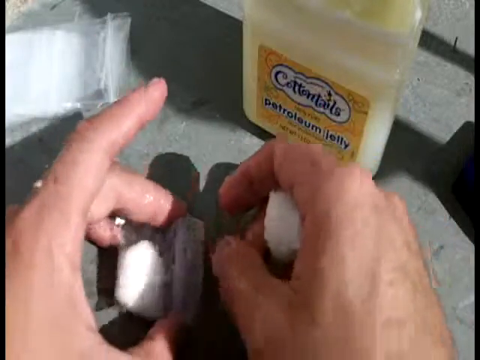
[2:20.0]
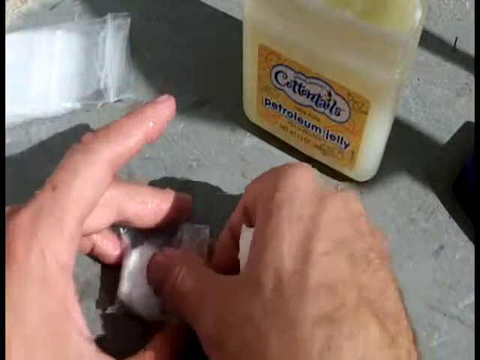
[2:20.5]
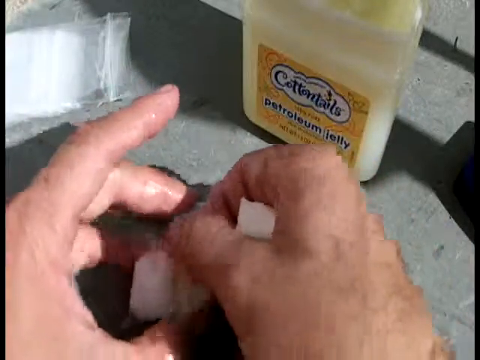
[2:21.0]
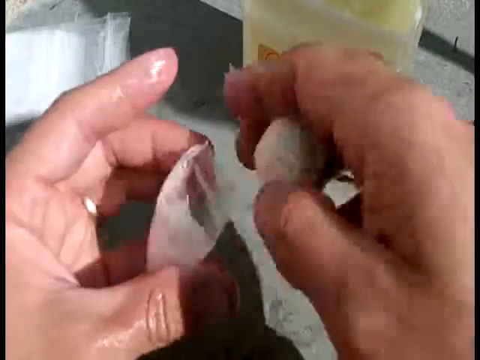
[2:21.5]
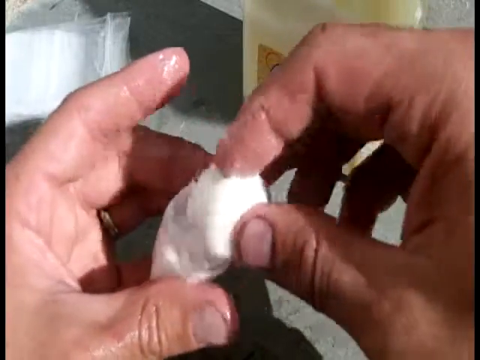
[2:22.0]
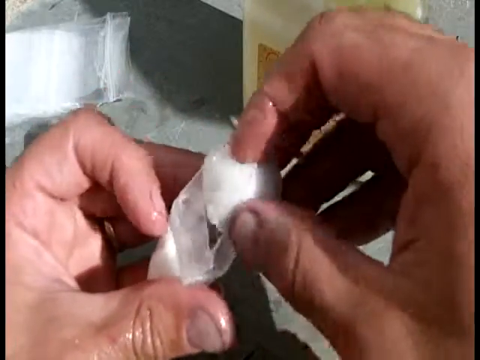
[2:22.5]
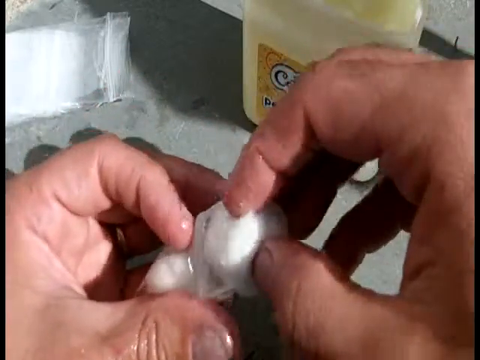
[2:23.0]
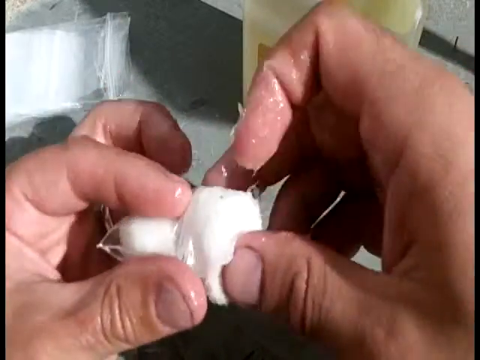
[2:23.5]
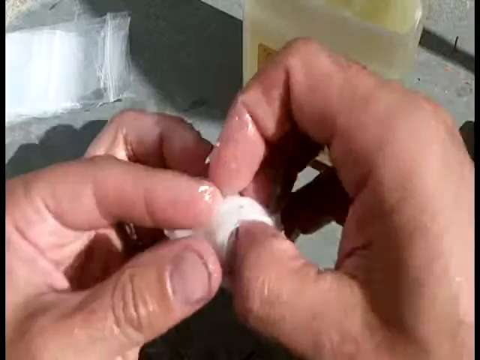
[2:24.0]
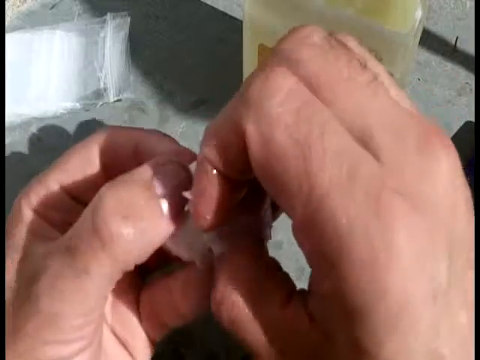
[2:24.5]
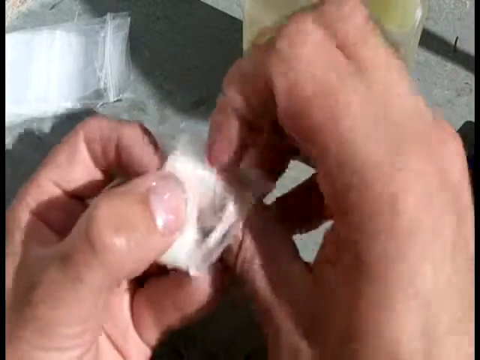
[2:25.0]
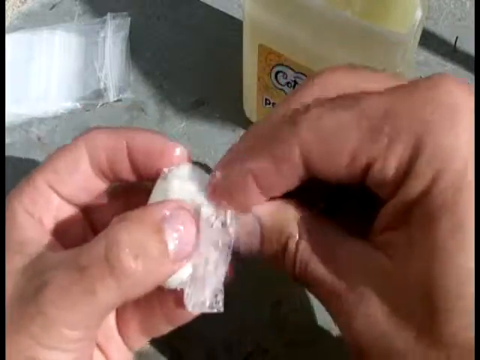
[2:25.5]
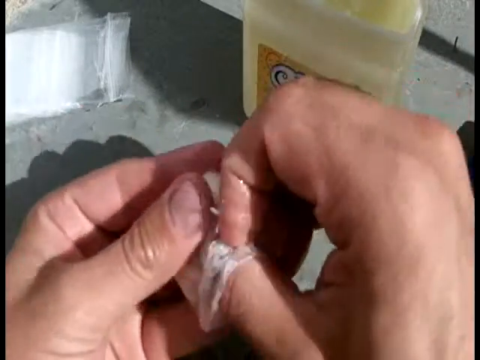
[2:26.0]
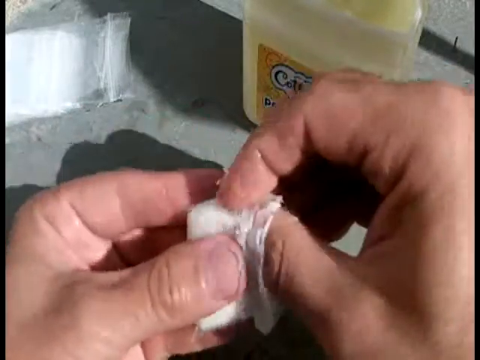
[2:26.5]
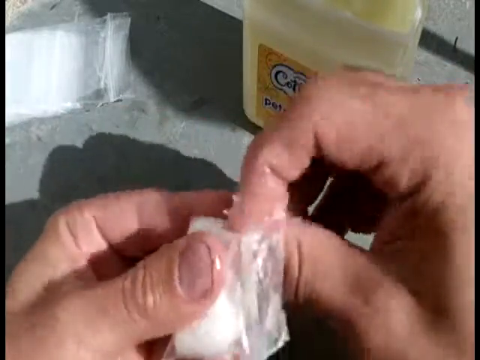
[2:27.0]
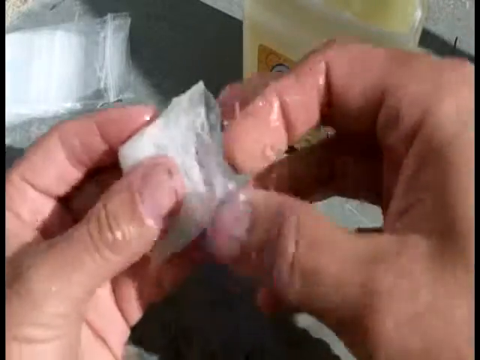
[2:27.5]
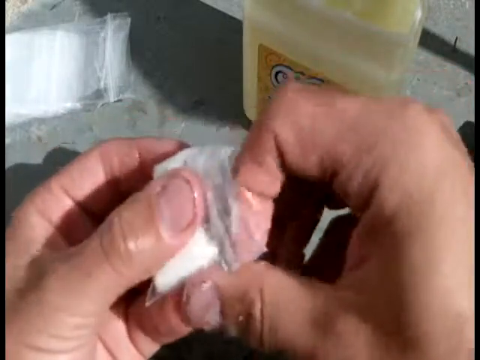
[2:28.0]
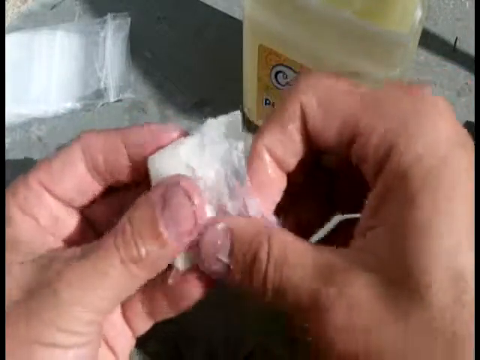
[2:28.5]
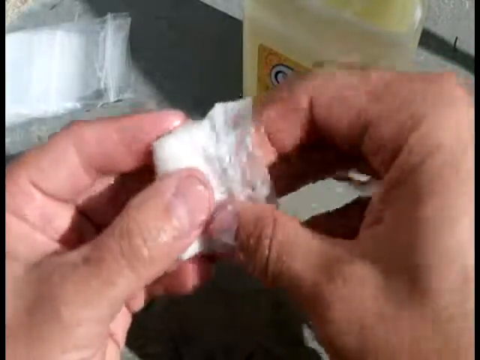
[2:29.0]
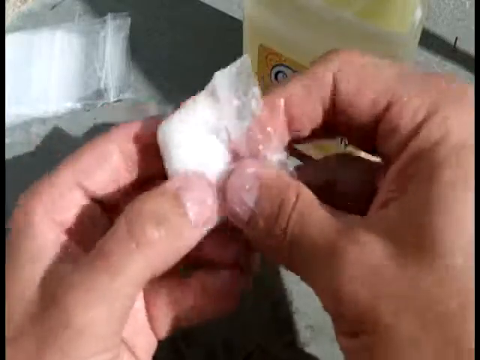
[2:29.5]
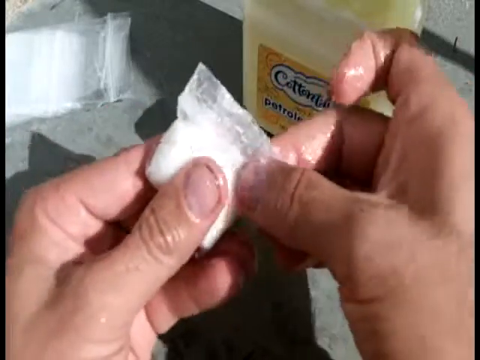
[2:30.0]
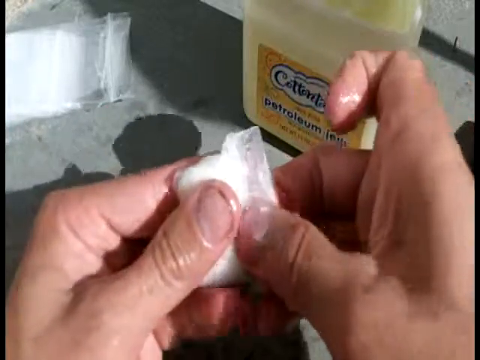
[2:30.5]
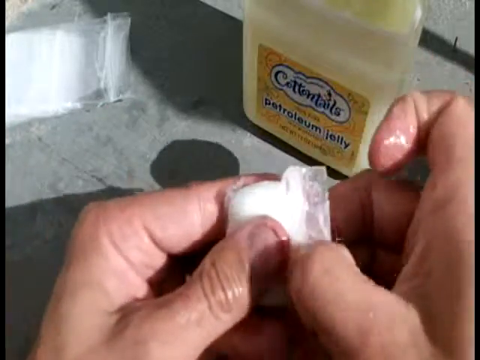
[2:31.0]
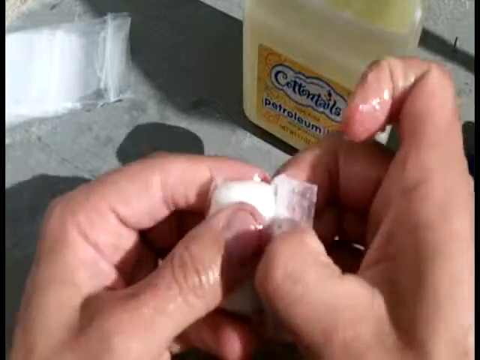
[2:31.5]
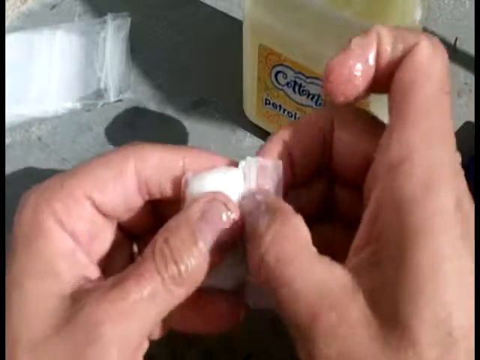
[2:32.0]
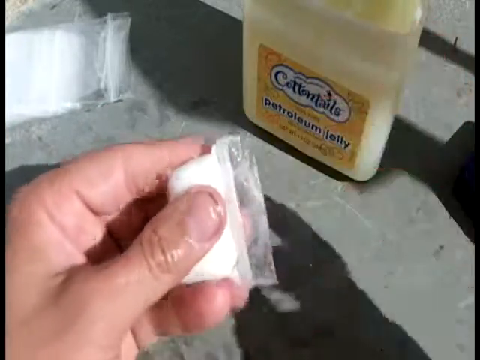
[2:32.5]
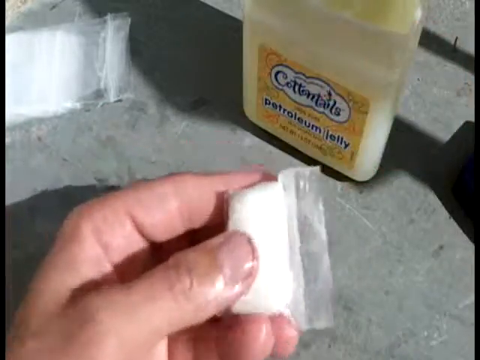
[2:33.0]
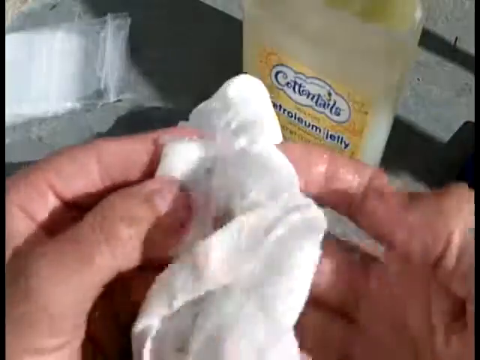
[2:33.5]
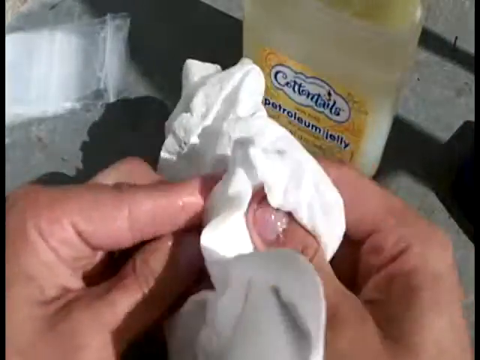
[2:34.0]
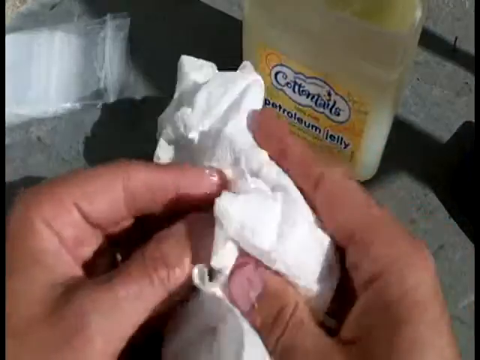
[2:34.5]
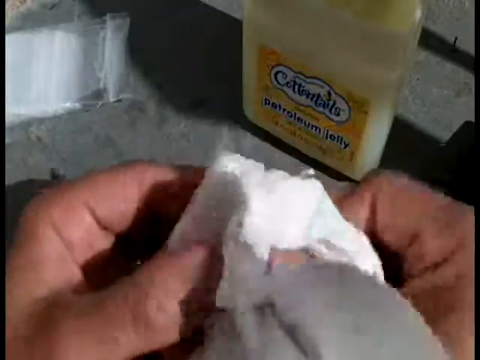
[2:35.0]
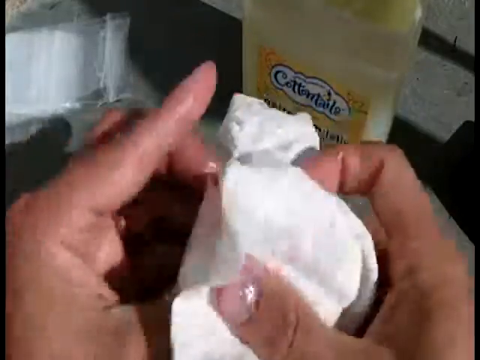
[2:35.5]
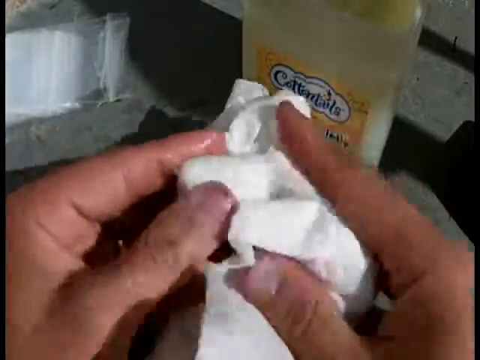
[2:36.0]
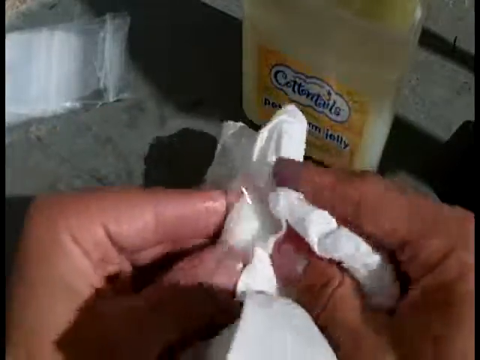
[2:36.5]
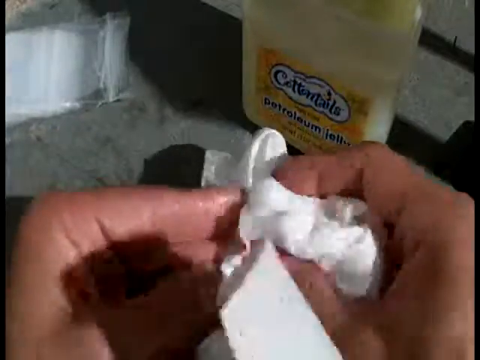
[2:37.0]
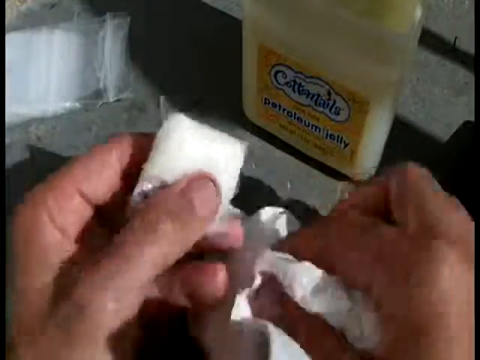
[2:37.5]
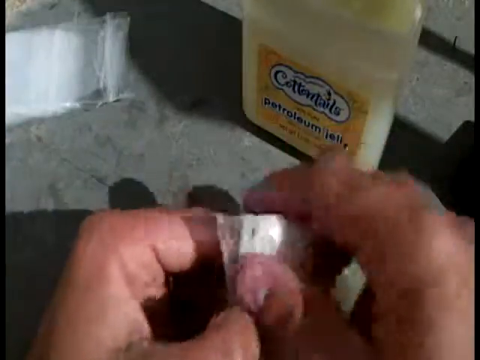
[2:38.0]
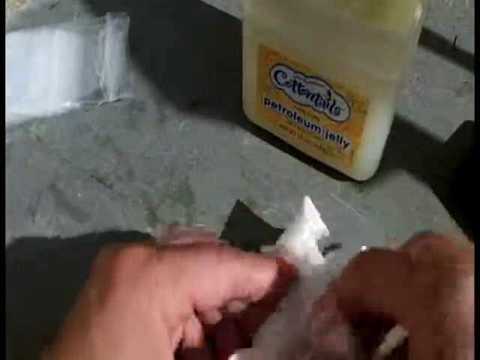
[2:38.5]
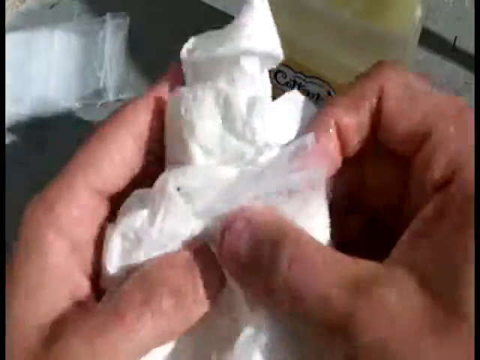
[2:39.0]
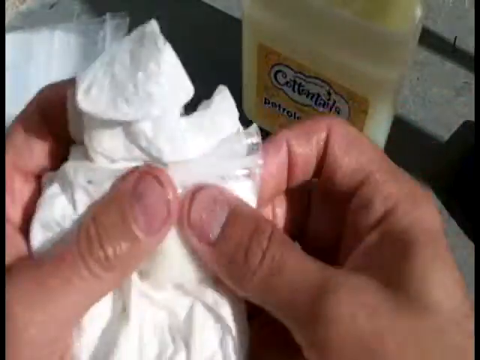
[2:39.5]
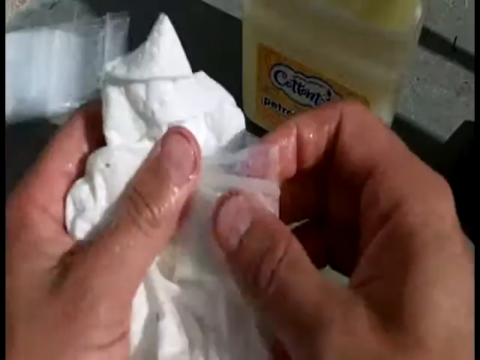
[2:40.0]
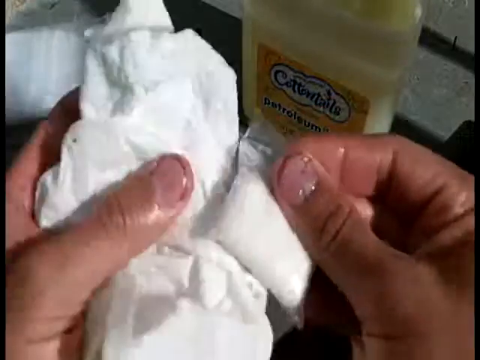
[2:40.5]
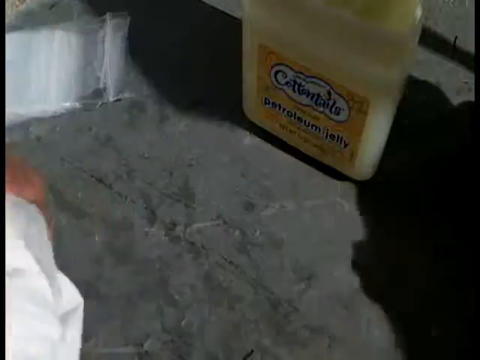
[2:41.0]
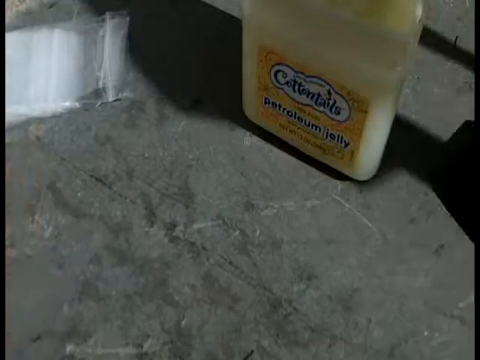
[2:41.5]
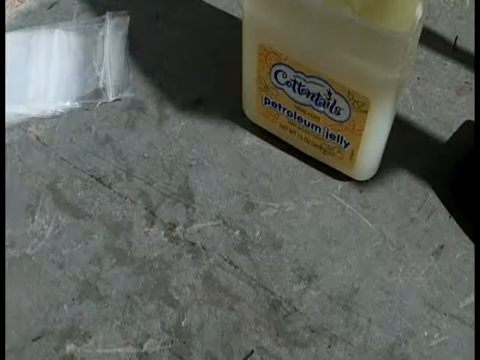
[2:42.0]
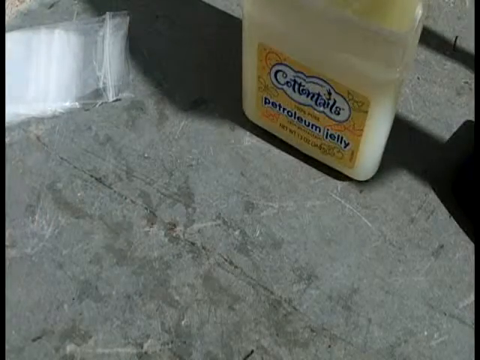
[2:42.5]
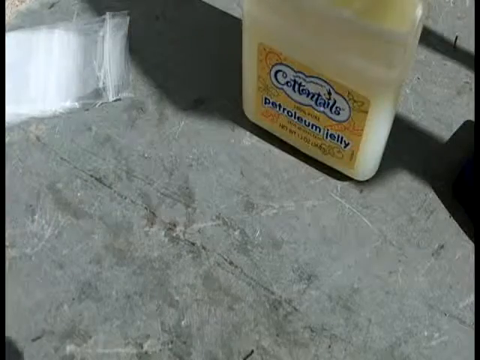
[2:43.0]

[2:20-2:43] A close-up shows a pair of hands holding a white cotton ball coated with petroleum jelly. They pick up the small, clear Ziploc bag that already has one cotton ball inside and put the cotton ball into it, shoving it in with a finger all the way to the bottom. They squeeze the zip top to fasten the bag, then grab a white napkin and wipe down the exterior of the bag so there is no longer petroleum jelly all over it. The bag is set somewhere off to the right, out of the camera's view, leaving the gray tabletop with the jar of light yellow petroleum jelly, lid off, on the top right side and, on the left side, a larger clear Ziploc bag with many other clear bags stuffed inside.